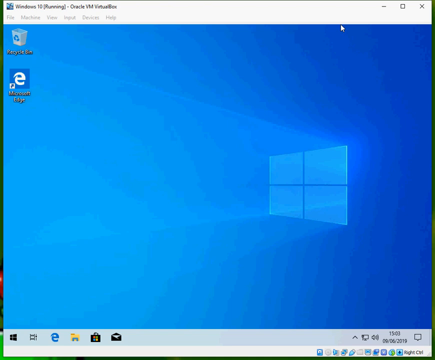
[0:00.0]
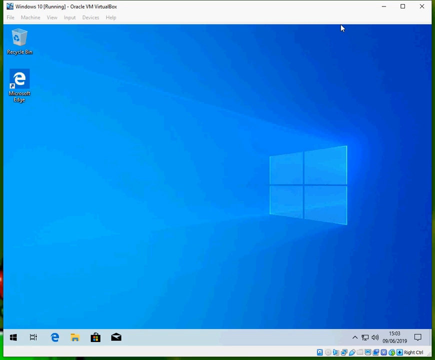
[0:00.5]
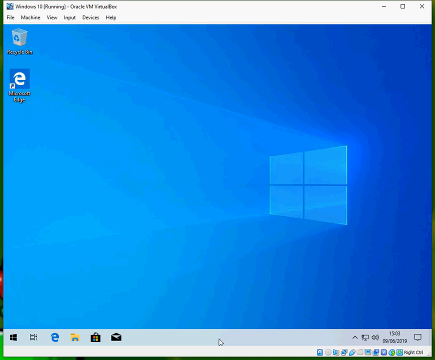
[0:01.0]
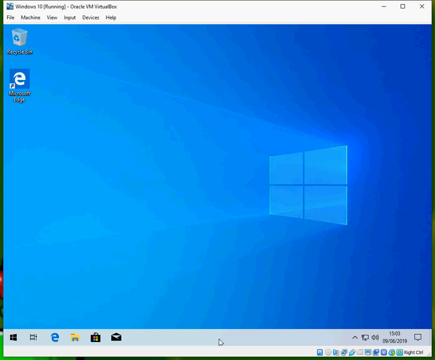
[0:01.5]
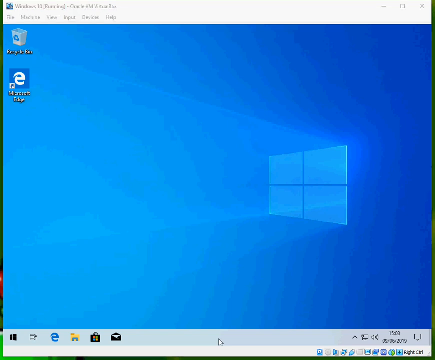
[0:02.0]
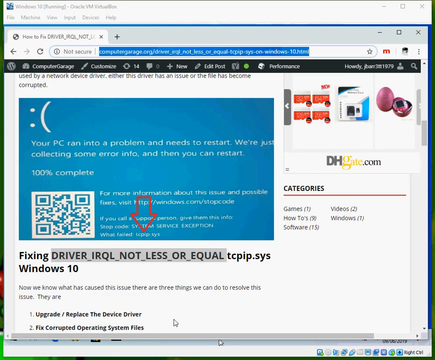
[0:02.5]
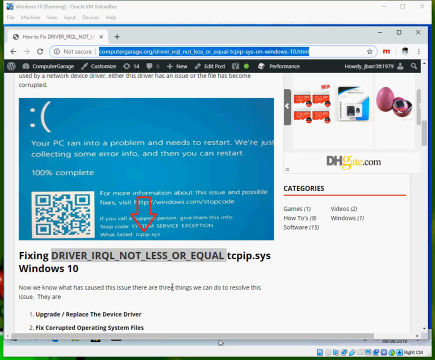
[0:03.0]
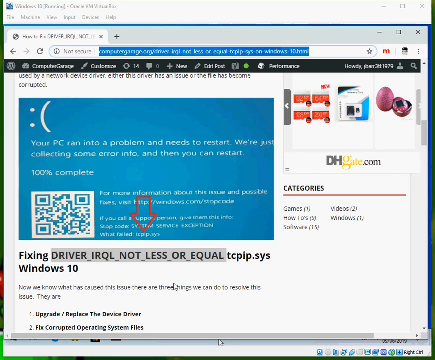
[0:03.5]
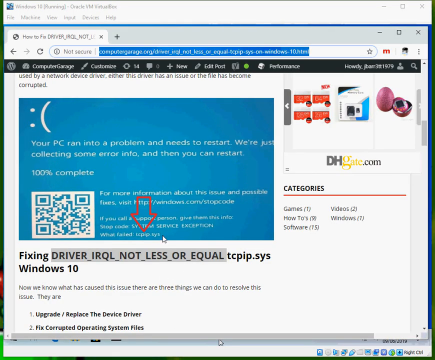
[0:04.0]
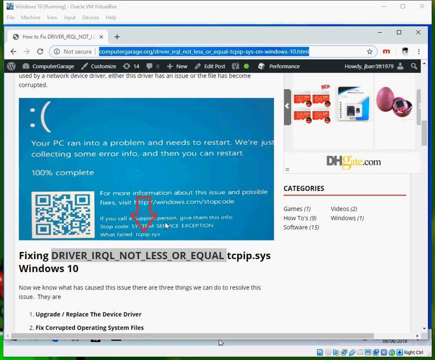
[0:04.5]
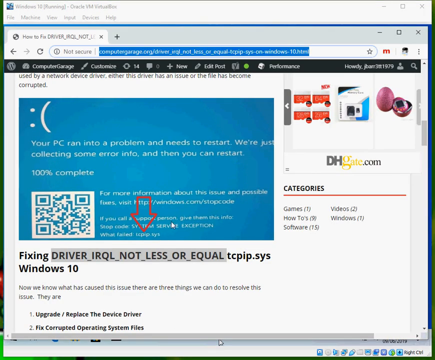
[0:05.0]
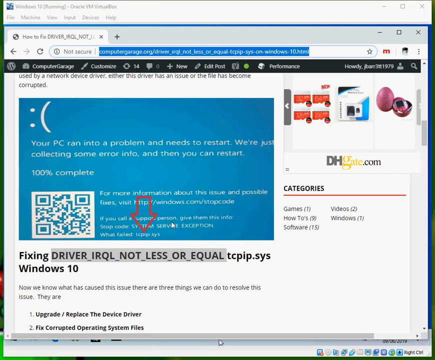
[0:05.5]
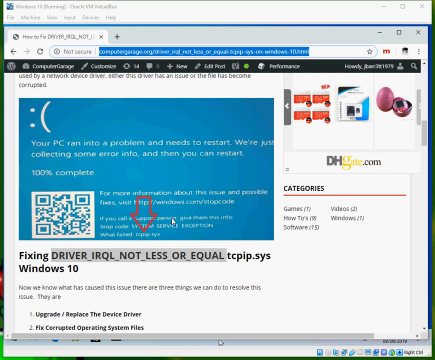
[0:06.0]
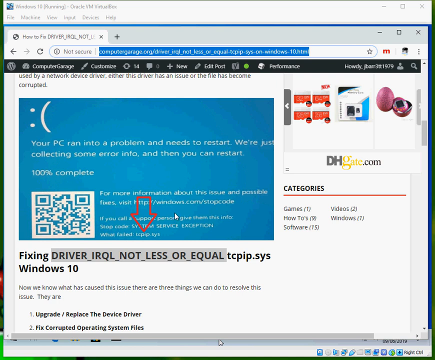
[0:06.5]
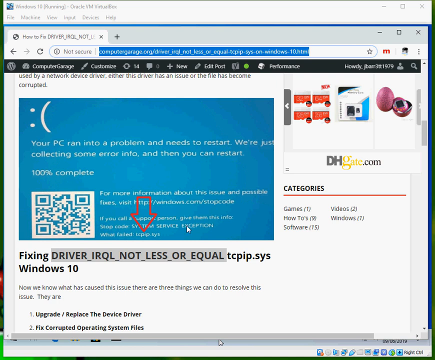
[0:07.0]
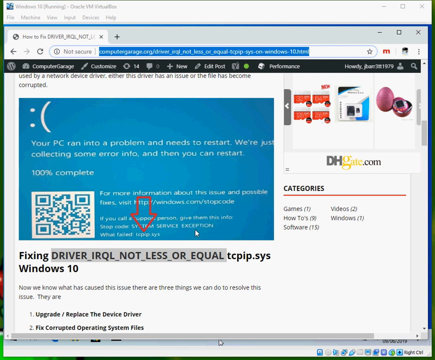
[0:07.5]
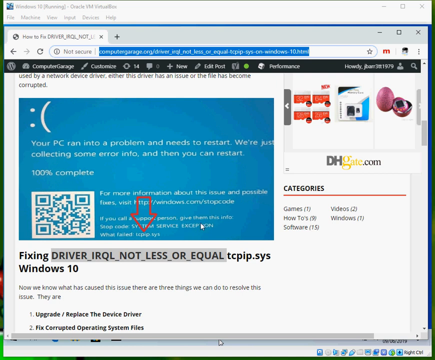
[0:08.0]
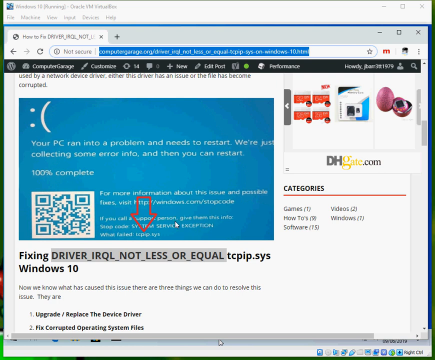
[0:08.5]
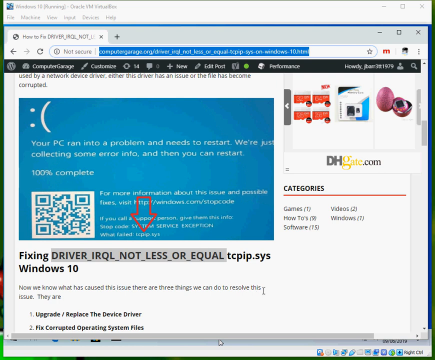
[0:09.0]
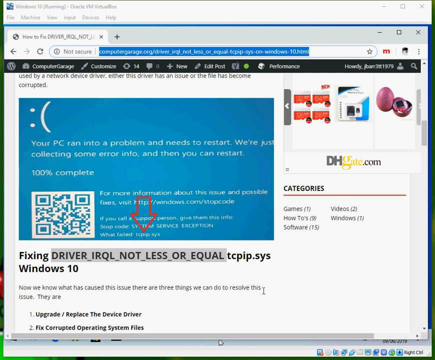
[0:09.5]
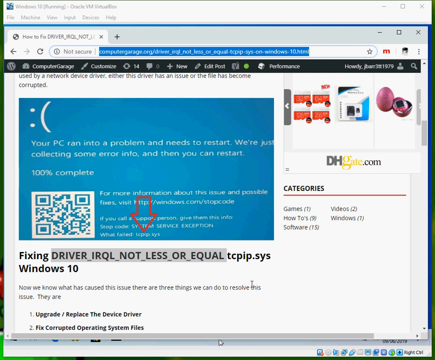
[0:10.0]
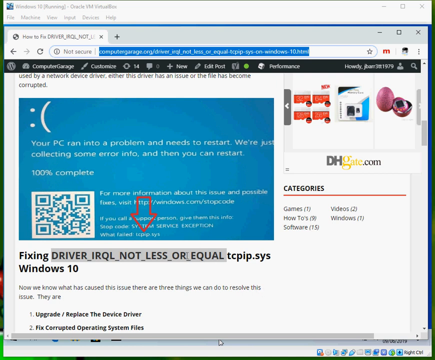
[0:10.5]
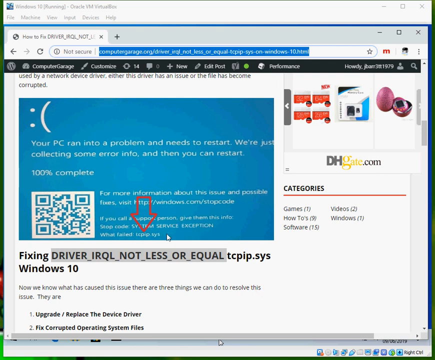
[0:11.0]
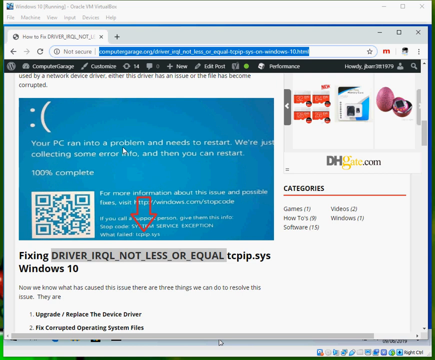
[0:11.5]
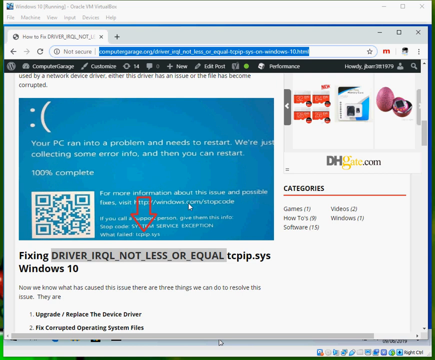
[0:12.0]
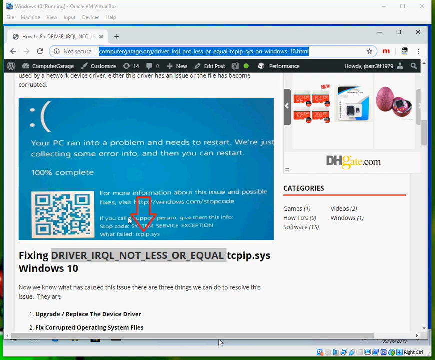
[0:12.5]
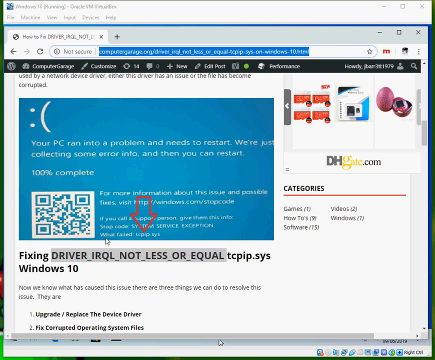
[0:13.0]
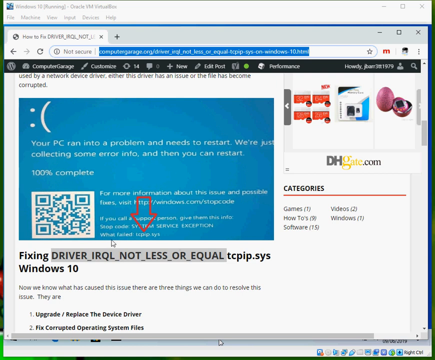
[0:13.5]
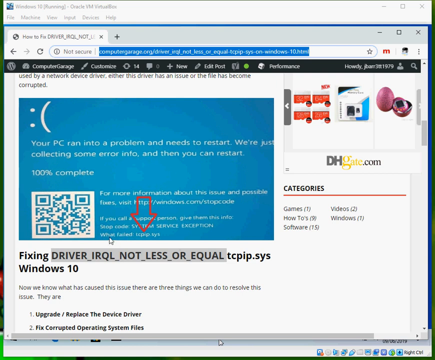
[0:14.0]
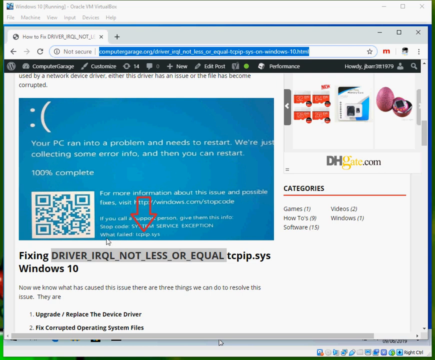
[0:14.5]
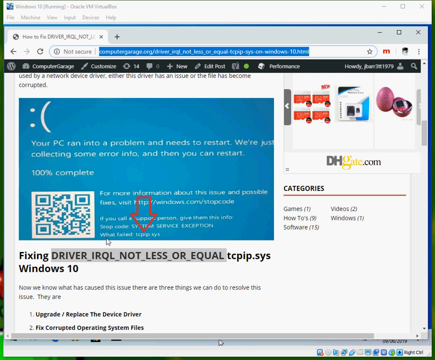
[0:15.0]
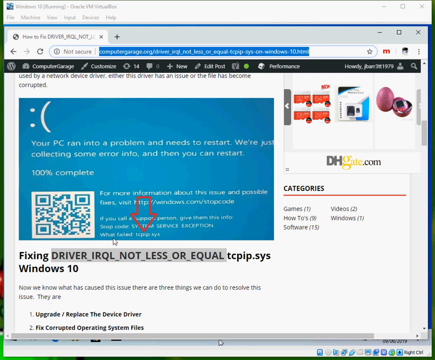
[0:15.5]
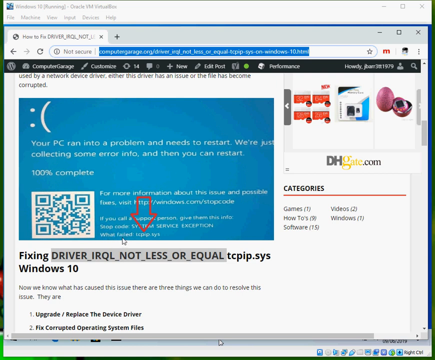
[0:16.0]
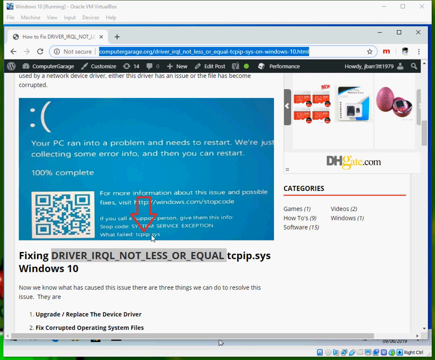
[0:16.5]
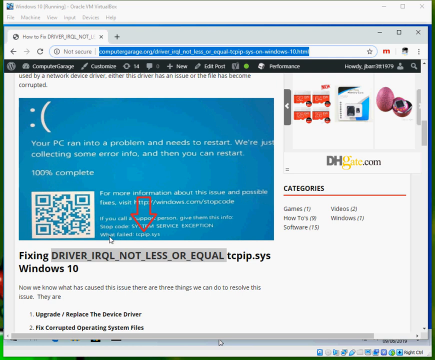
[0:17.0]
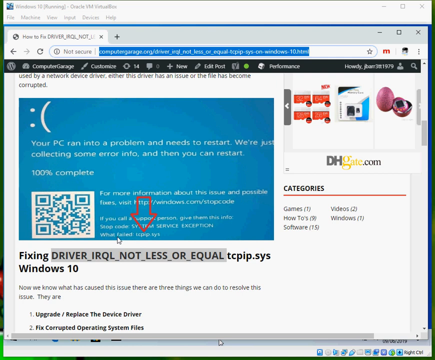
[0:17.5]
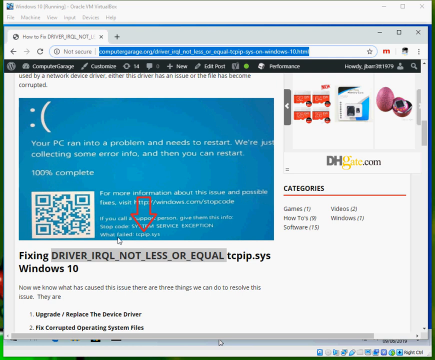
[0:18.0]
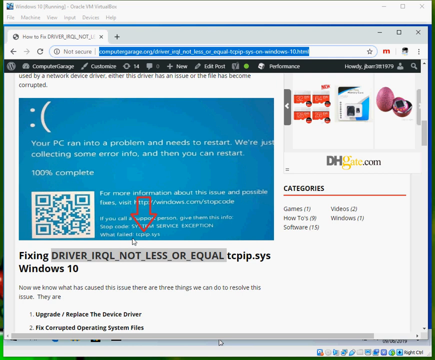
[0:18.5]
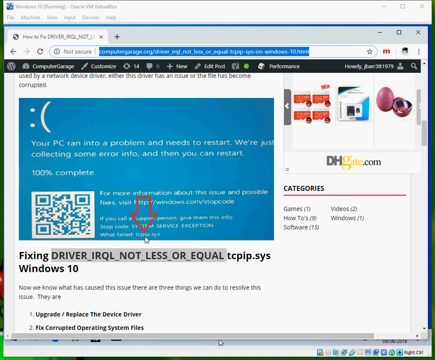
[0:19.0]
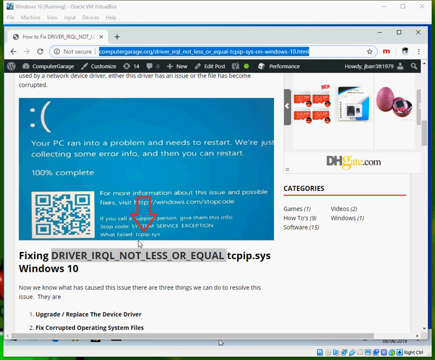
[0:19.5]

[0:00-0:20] The video begins with an image of a Windows PC screen, with a pop-up that says "Windows 10 running." There are two shortcuts, a recycling bin and Microsoft Edge, and the Microsoft Windows logo appears in the window with the shadow of light coming through. The video transitions to a page, again showing Windows 10 running. A black toolbar at the top has a banner that appears to read "Computer Garage," with the Windows or WordPress logo in the left-hand corner. In the middle of the page is a blue box with white text that reads "your PC ran into a problem and needs to restart. We're just collecting some error info. And then you can restart." Below that is "100% complete." There is a QR code, and to the right of it is text about how to get more information about the issue and possible fixes, along with a link. In the middle of the box is a red downward-facing arrow, and below it are the words "fixing a driver for Windows 10." A cursor moves around the page erratically.